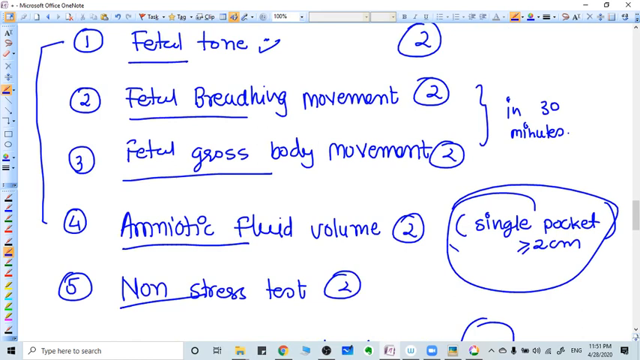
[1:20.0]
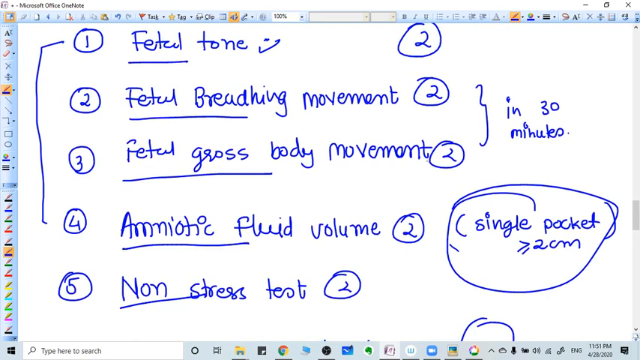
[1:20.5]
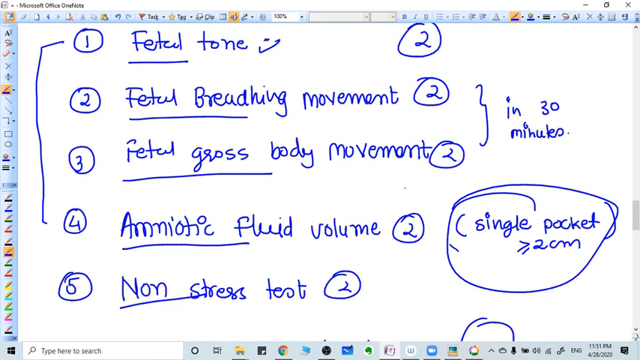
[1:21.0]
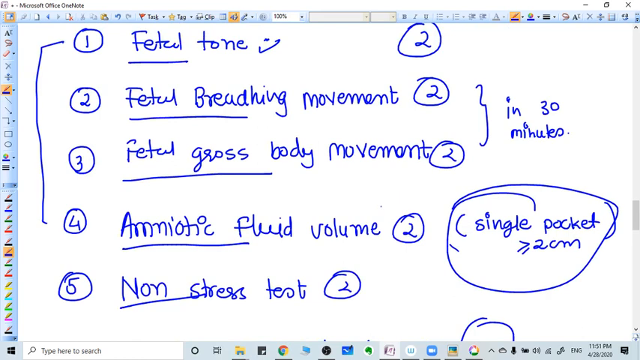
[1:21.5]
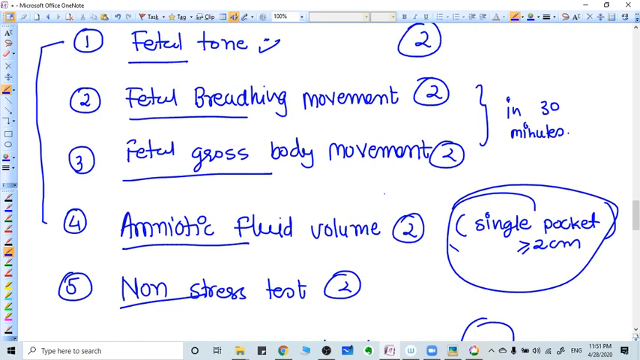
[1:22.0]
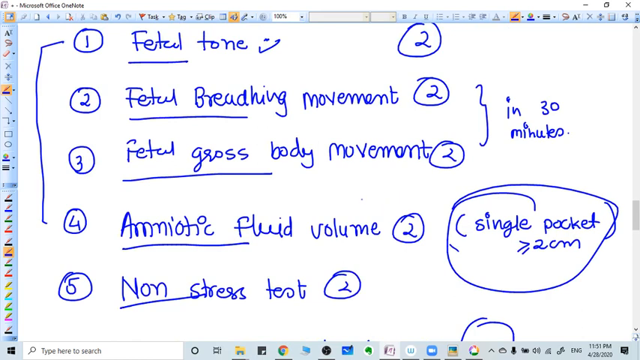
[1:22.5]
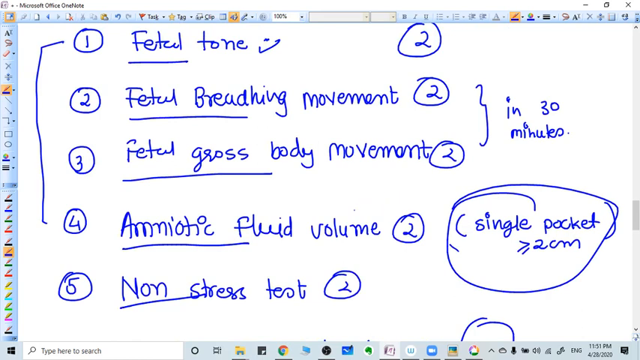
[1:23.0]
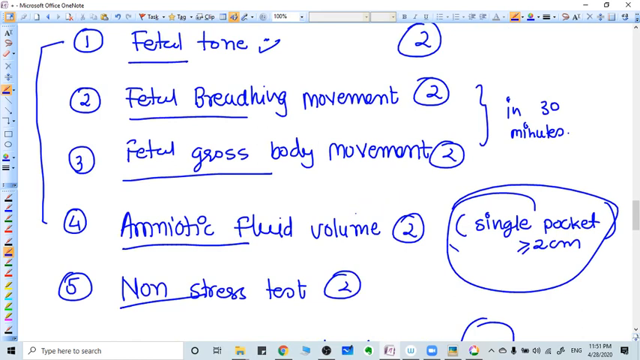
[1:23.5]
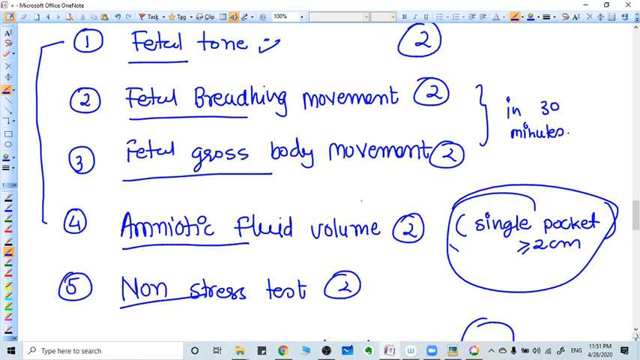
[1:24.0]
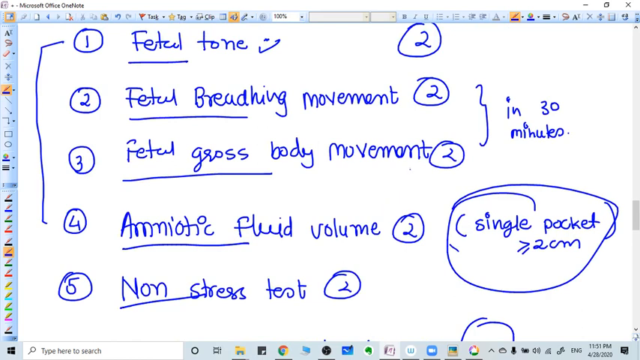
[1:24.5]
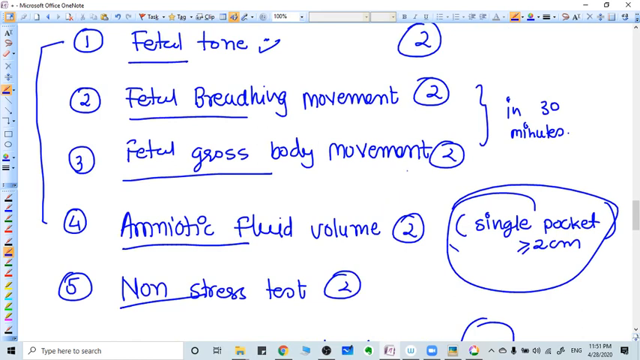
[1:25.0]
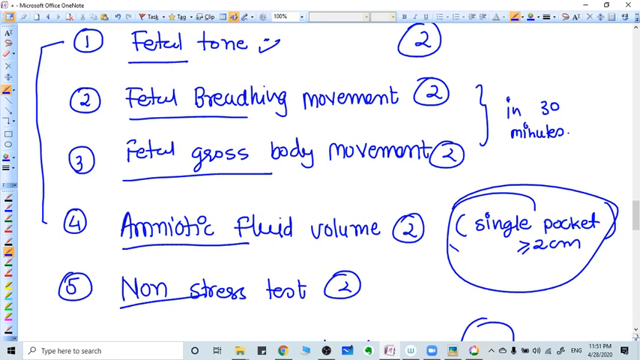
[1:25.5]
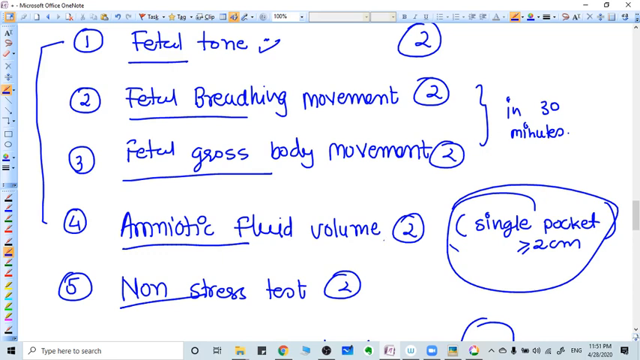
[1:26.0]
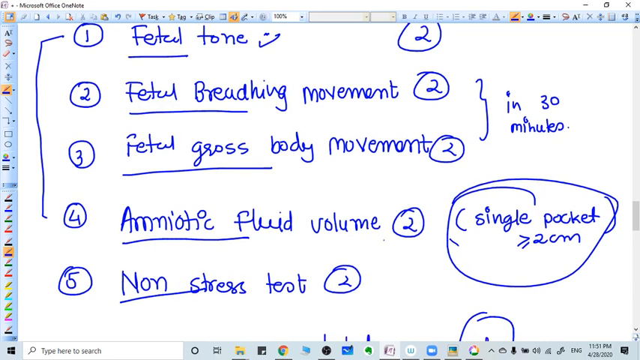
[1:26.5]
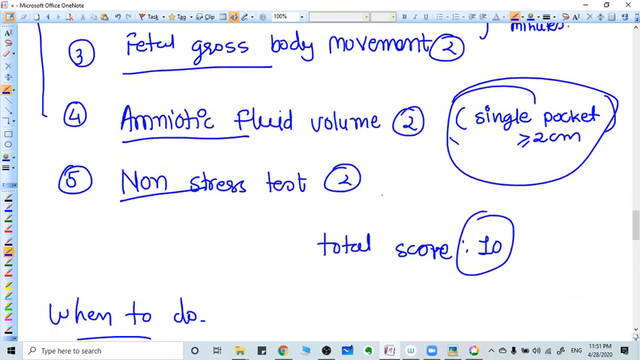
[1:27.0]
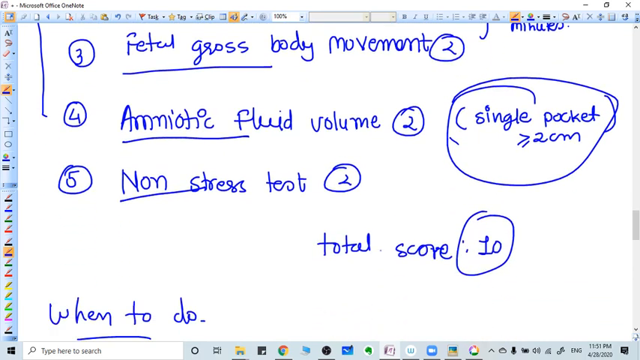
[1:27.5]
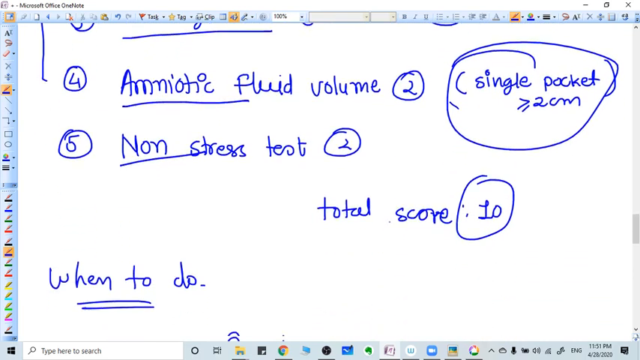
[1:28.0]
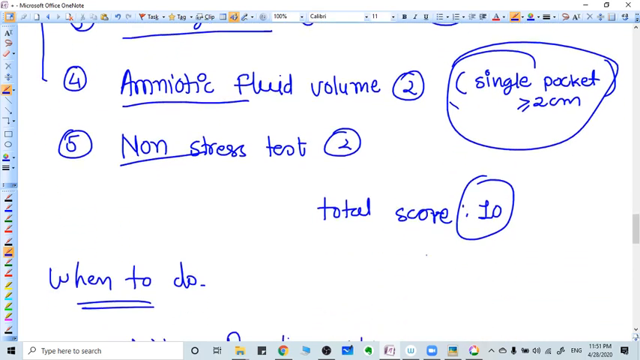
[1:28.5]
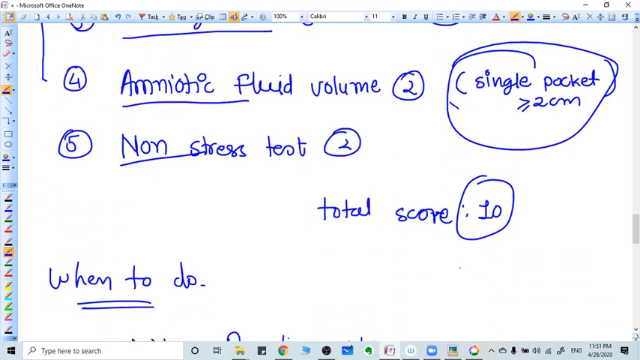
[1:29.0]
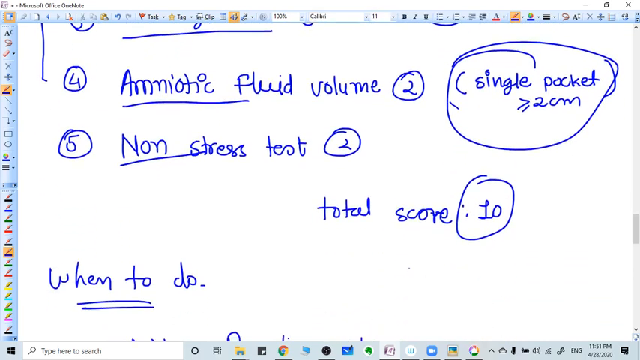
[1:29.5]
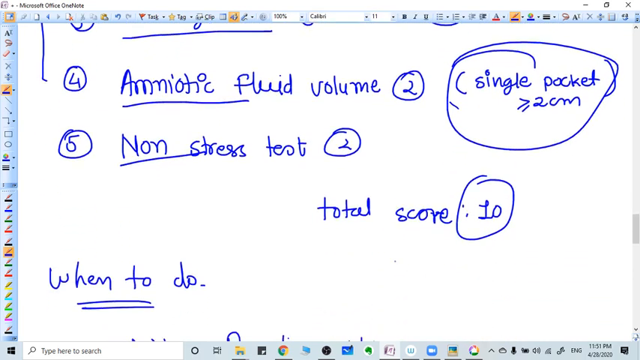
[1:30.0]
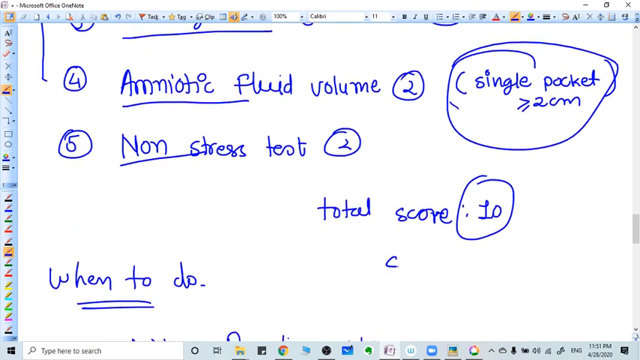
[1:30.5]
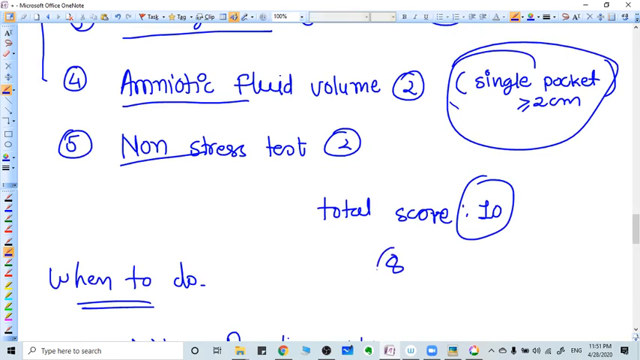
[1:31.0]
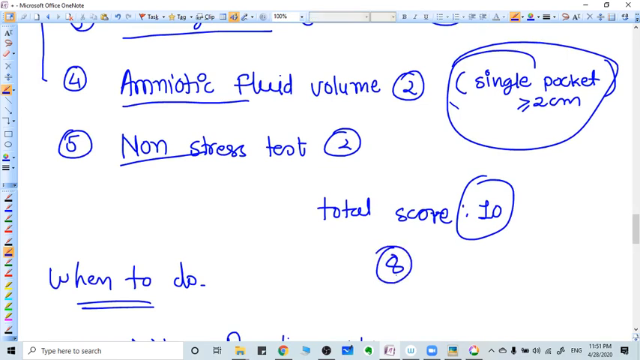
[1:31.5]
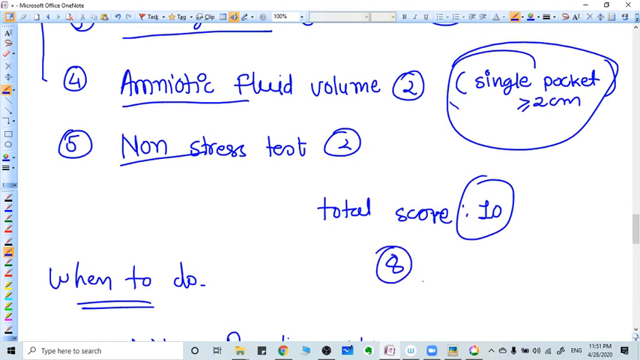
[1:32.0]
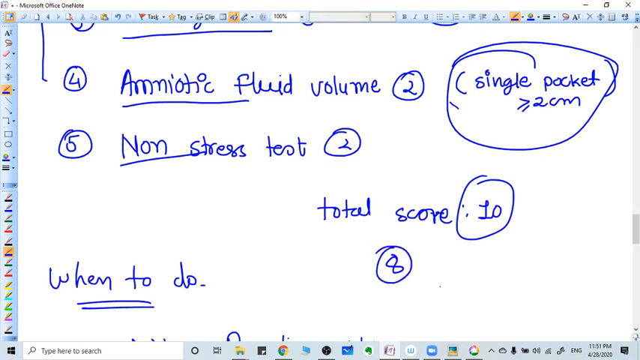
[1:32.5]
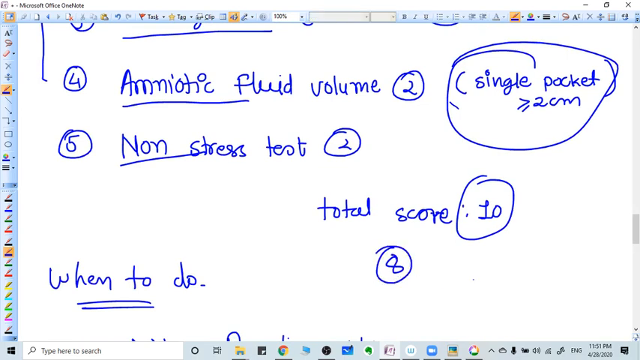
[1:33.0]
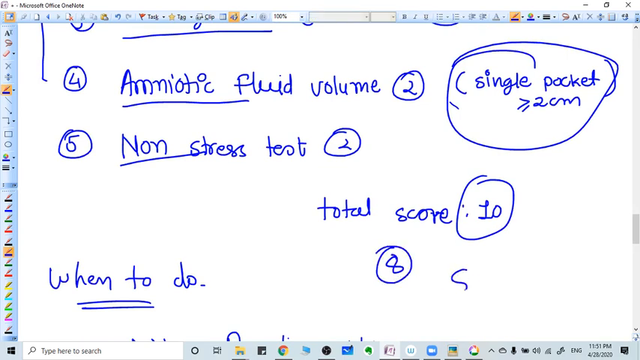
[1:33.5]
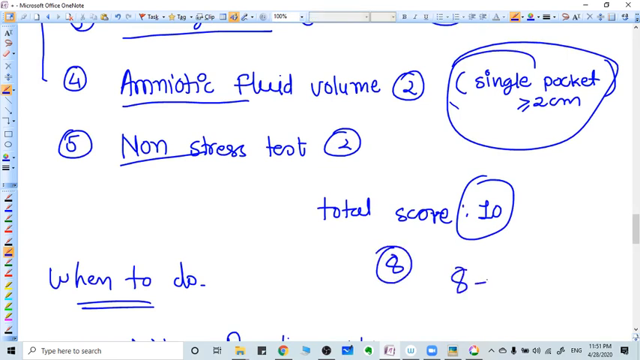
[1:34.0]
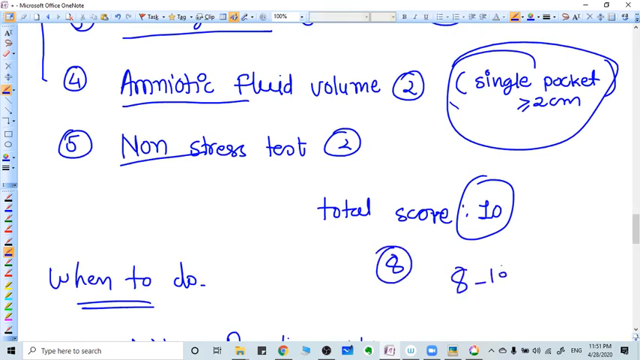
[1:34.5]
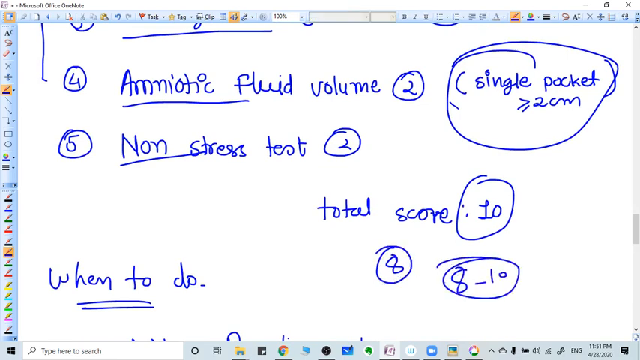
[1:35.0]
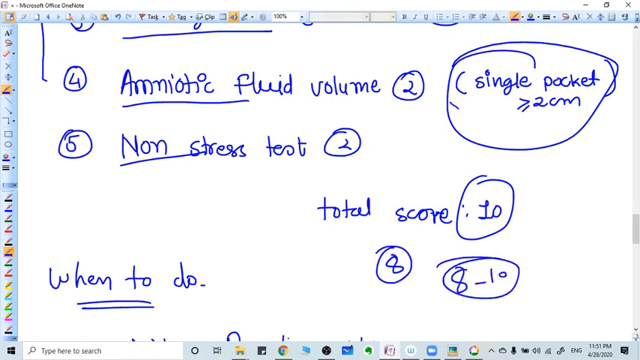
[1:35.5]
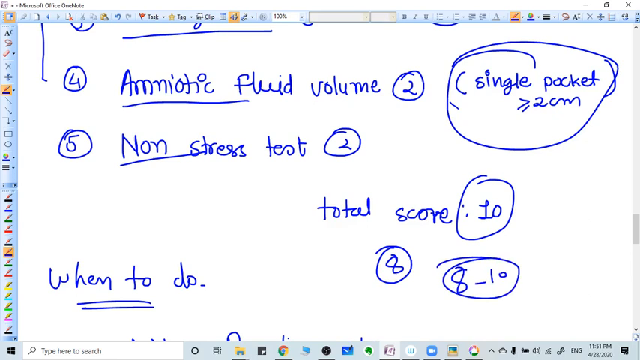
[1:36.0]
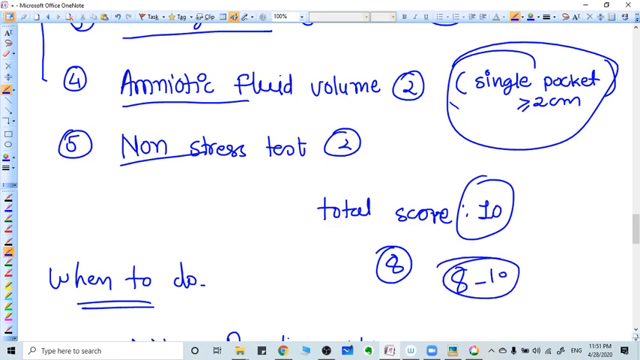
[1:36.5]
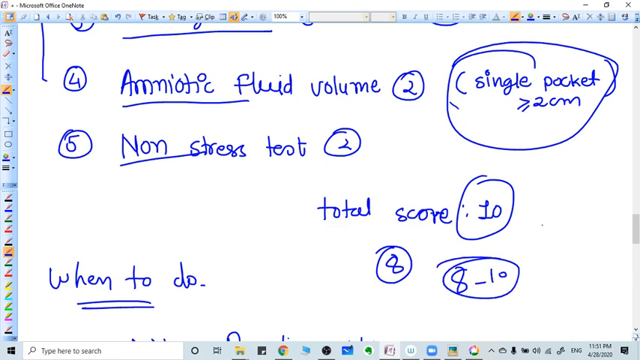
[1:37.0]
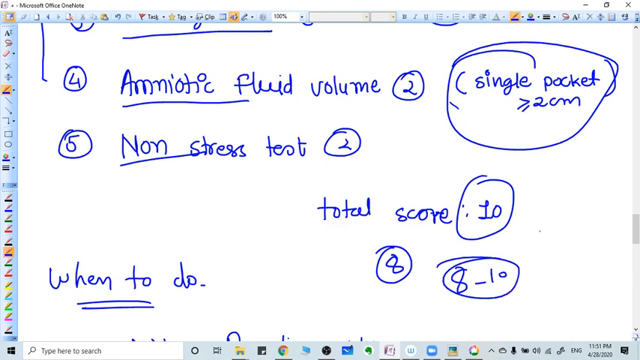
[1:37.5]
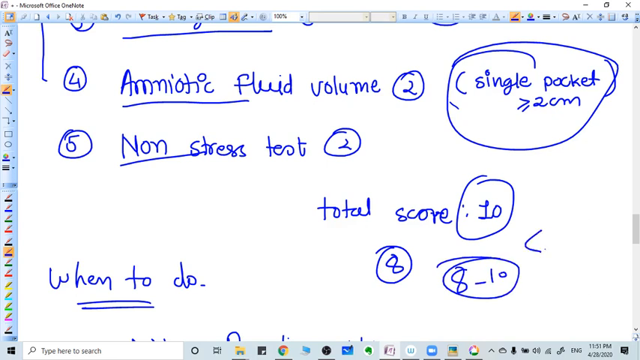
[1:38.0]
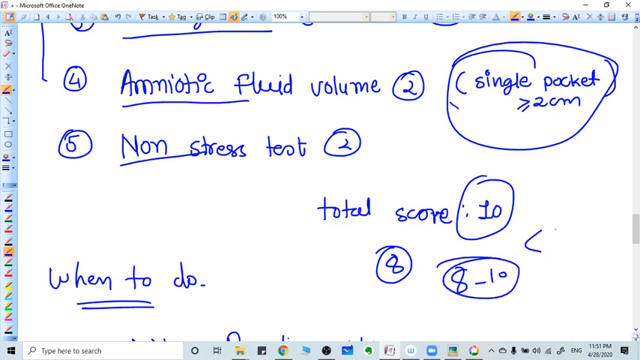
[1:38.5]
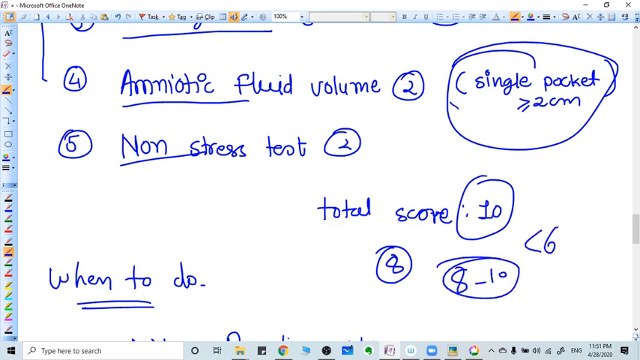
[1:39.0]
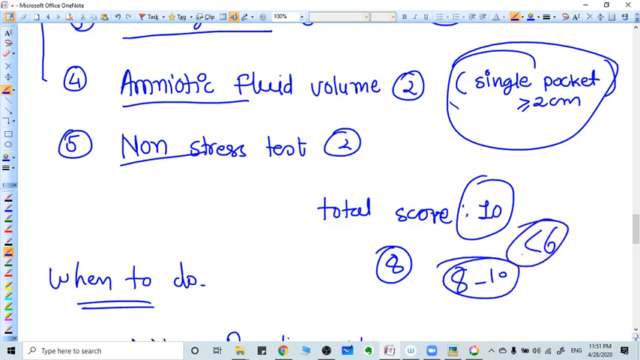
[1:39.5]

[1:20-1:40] The very small cursor moves the page up and down. The person then writes the number 8 and circles it, then writes "8 to 10" next to the first 8 and circles that as well. Everything is written in blue. A little to the top right of the 8 and the 10 they write "C6" and circle it. The cursor then quickly moves over to the scroll bar on the right-hand side of the screen. The rest of the OneNote page stays the same, with the X at the top, the minimize and maximize bars, and the other icons visible.